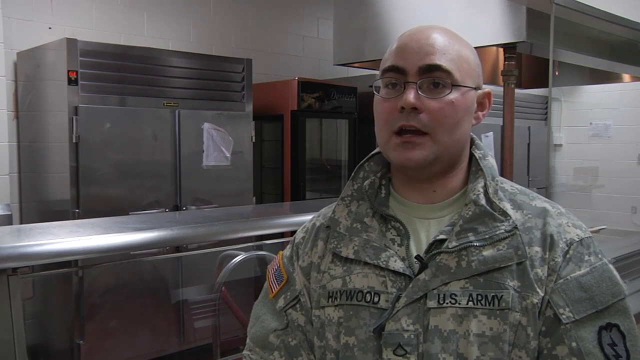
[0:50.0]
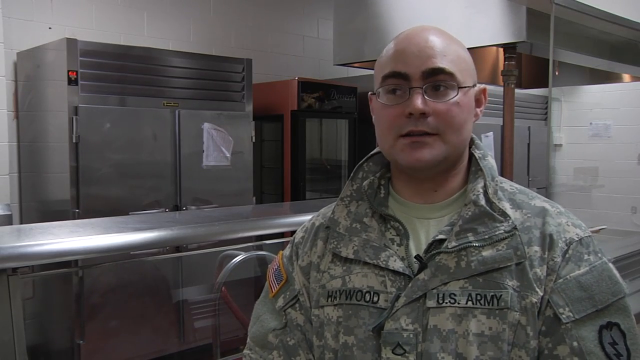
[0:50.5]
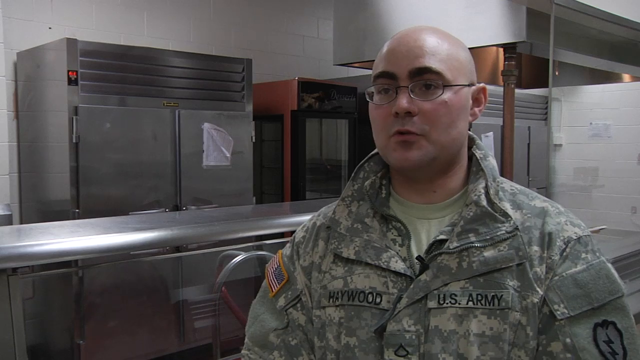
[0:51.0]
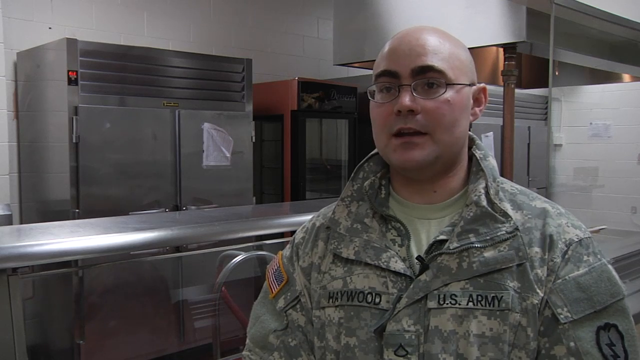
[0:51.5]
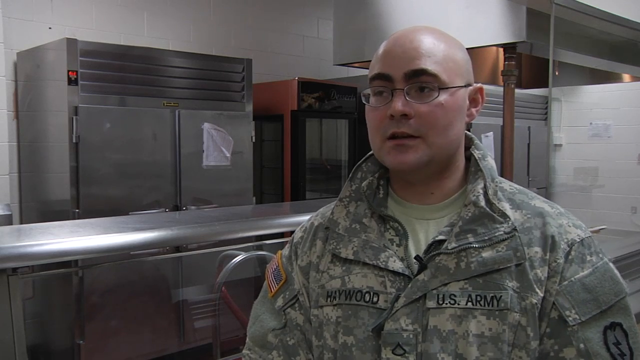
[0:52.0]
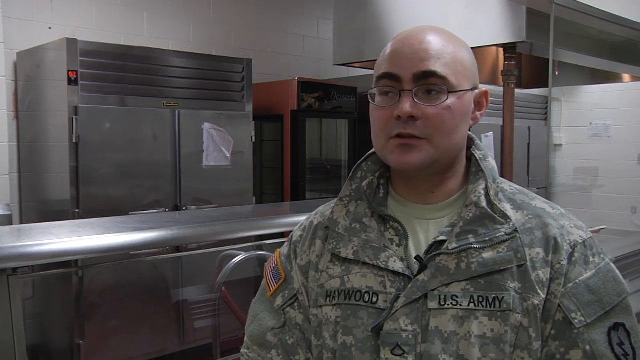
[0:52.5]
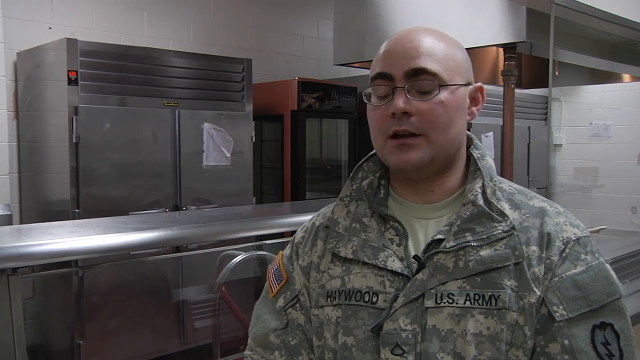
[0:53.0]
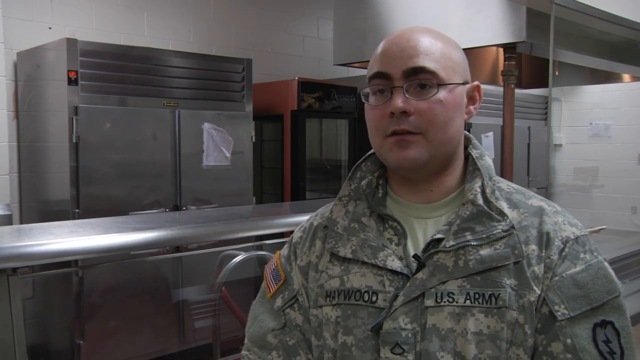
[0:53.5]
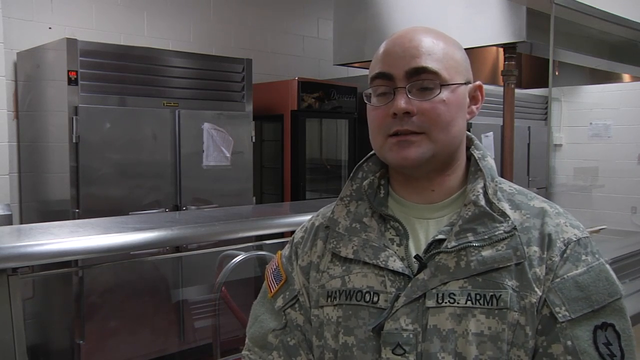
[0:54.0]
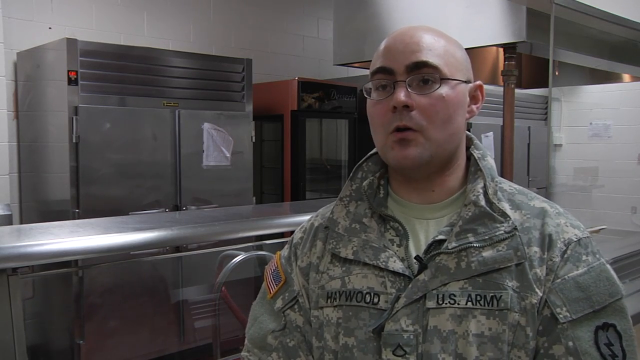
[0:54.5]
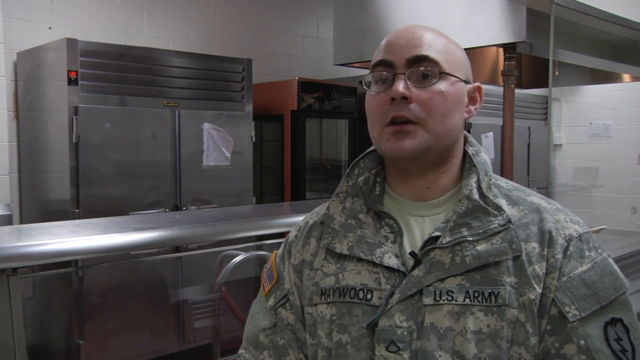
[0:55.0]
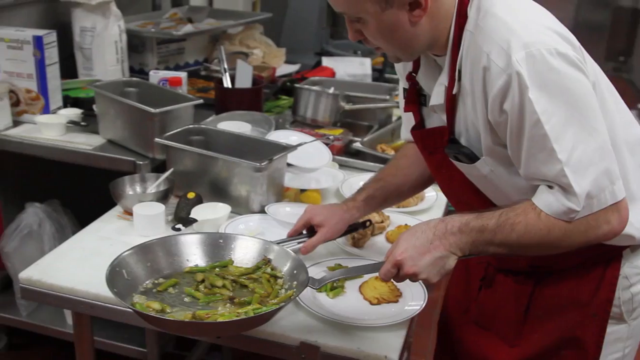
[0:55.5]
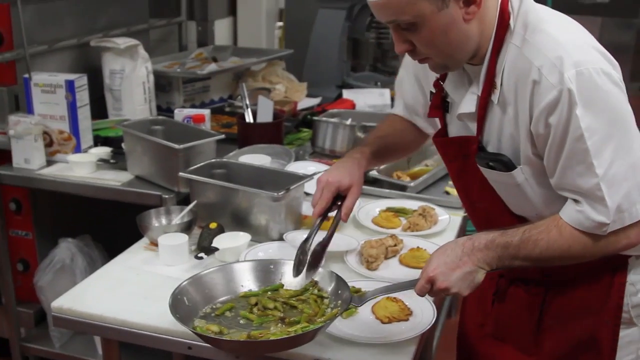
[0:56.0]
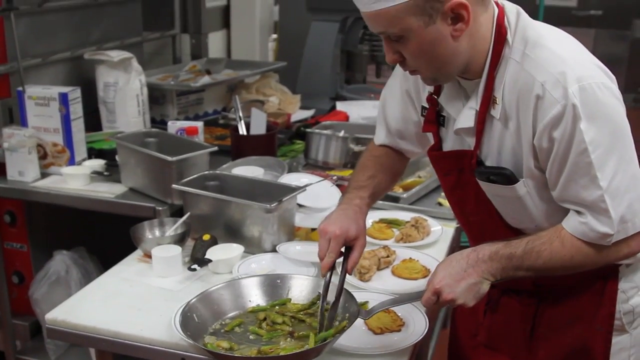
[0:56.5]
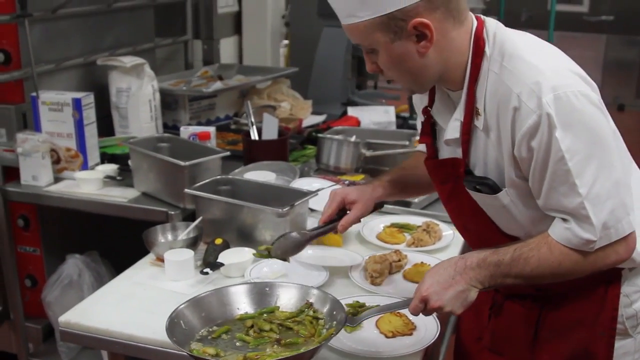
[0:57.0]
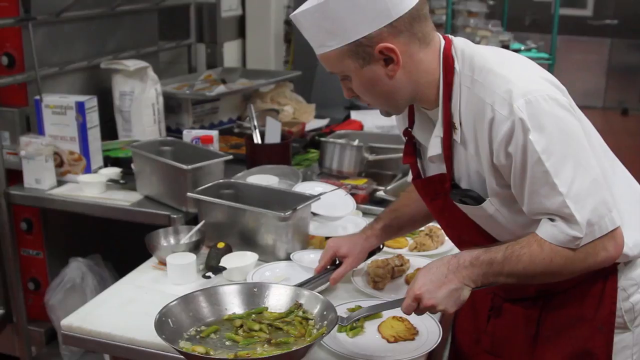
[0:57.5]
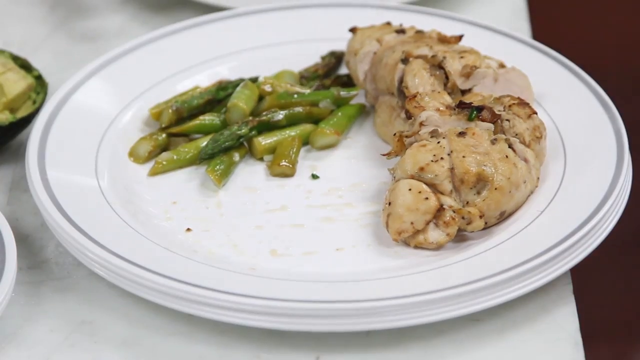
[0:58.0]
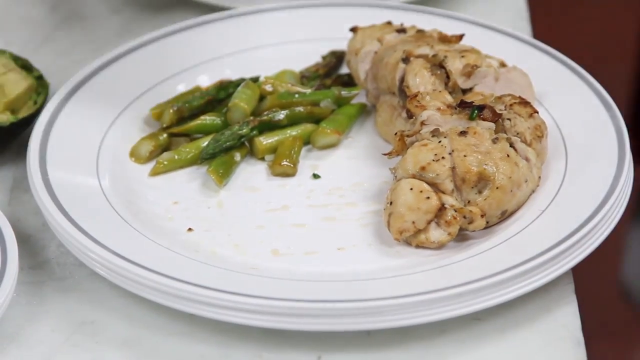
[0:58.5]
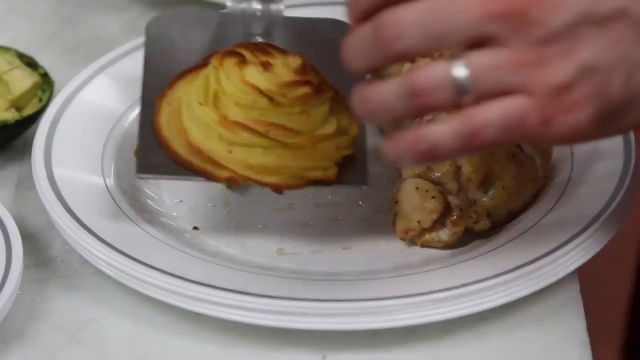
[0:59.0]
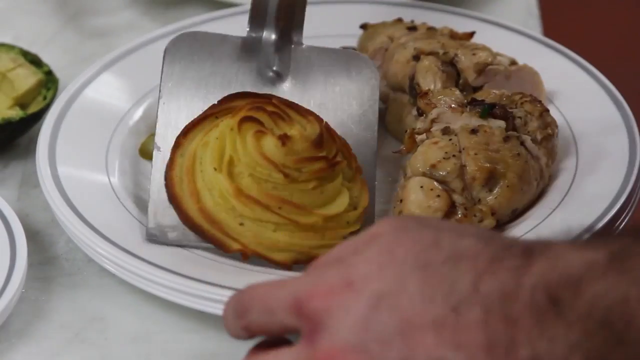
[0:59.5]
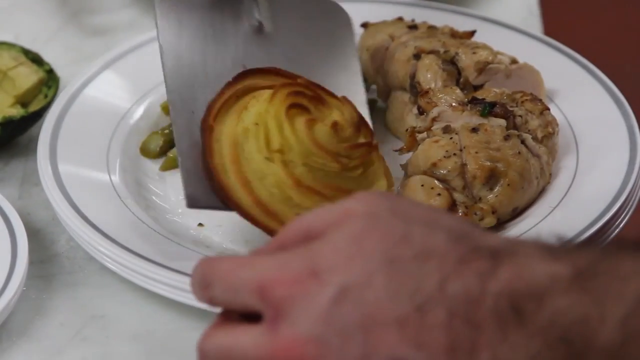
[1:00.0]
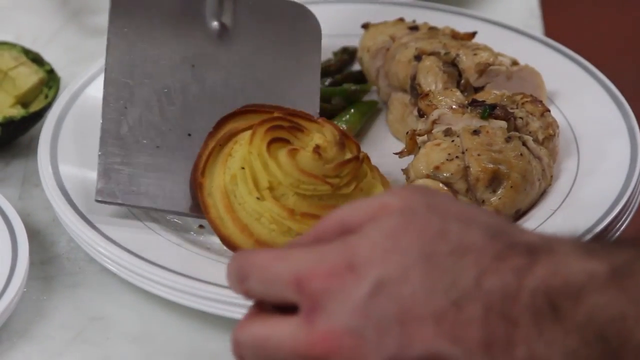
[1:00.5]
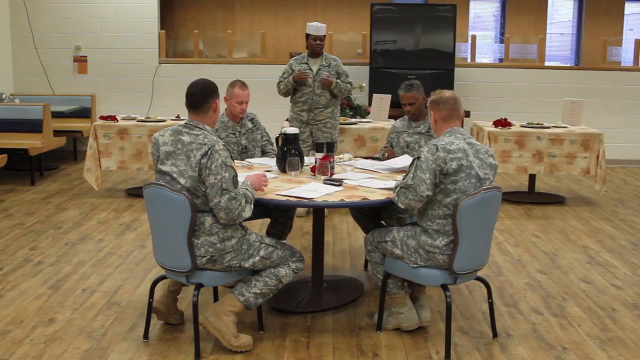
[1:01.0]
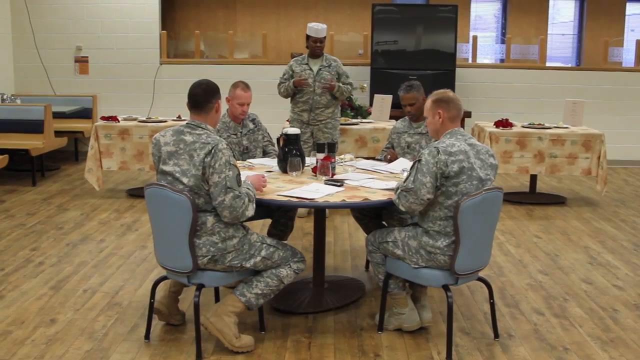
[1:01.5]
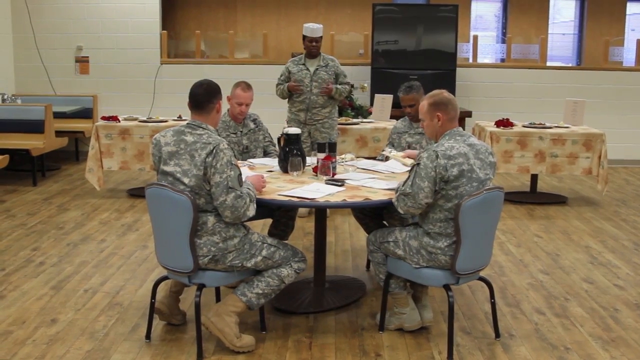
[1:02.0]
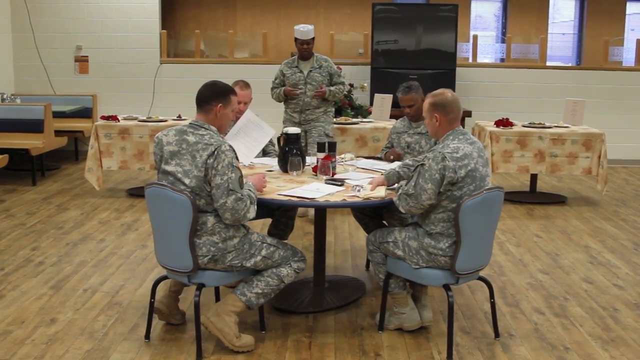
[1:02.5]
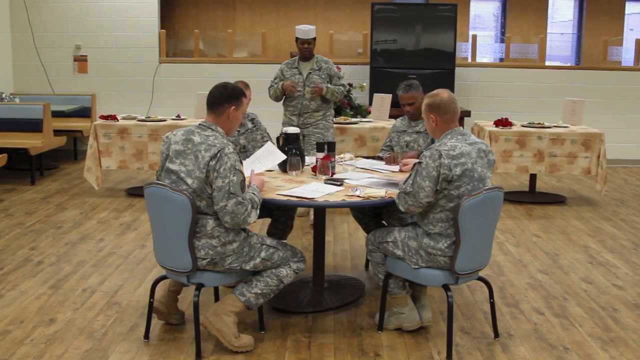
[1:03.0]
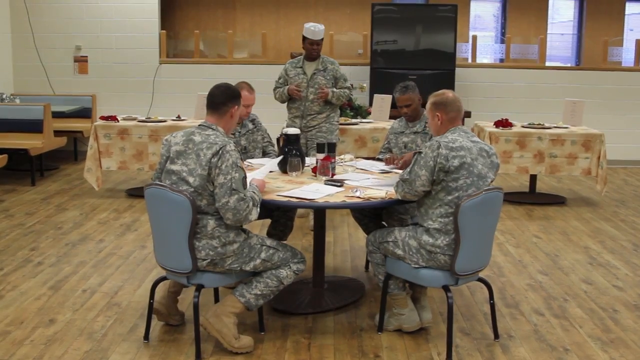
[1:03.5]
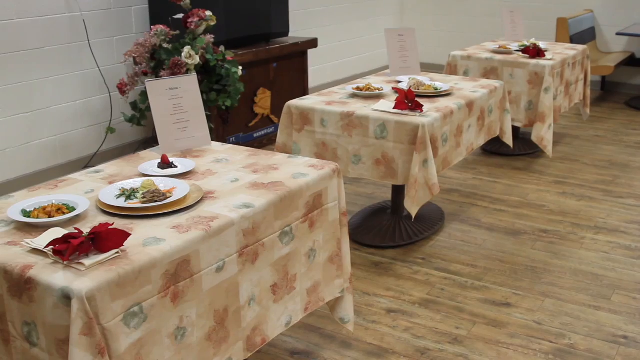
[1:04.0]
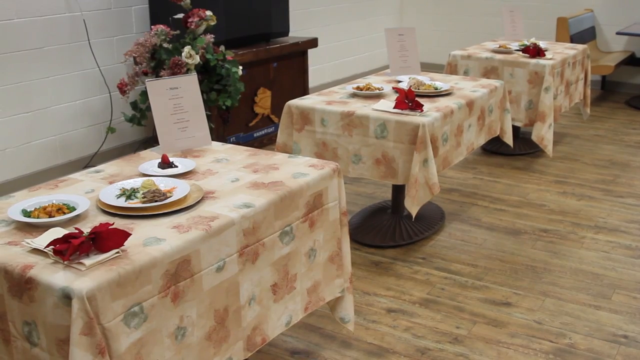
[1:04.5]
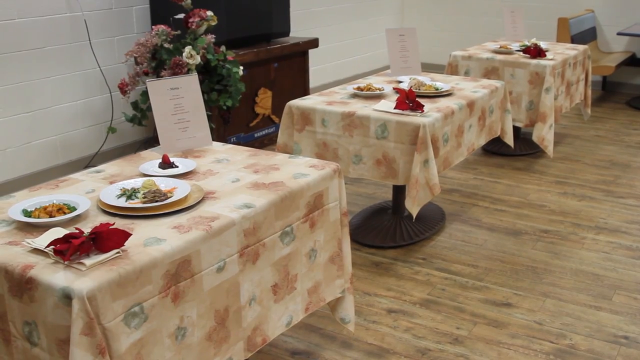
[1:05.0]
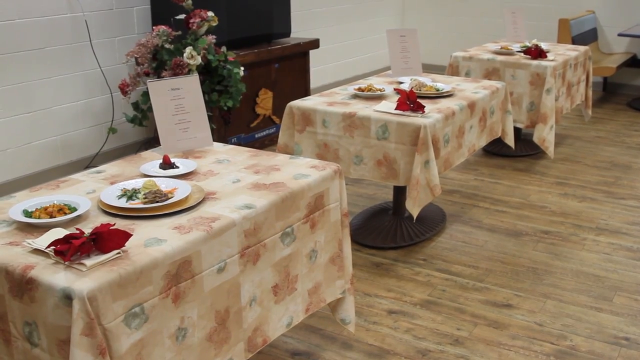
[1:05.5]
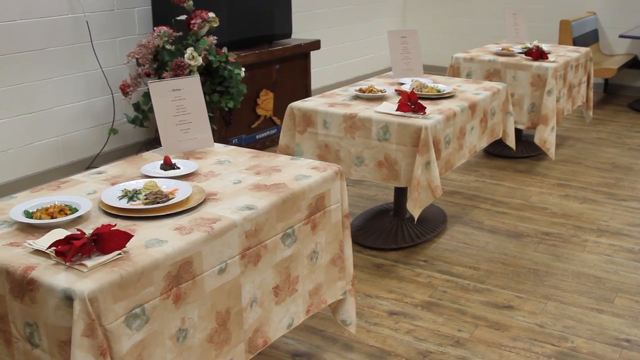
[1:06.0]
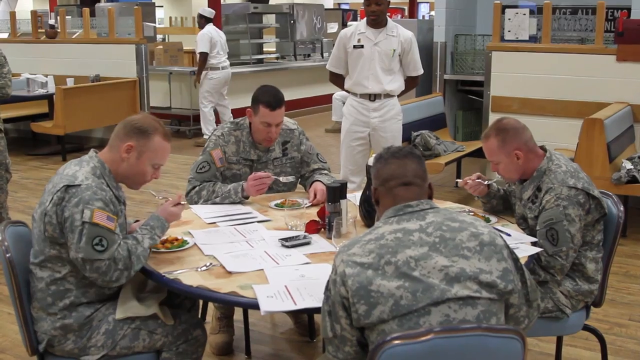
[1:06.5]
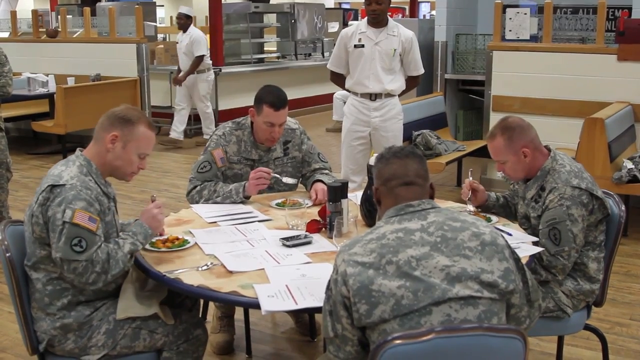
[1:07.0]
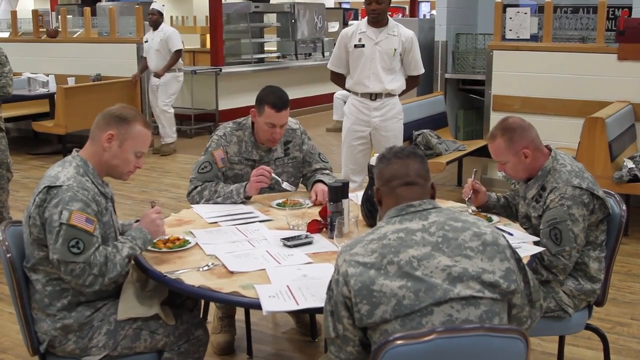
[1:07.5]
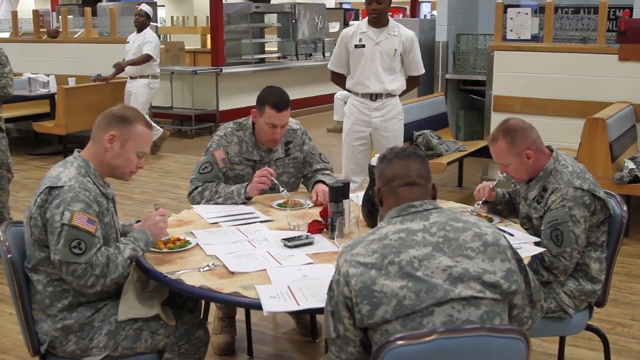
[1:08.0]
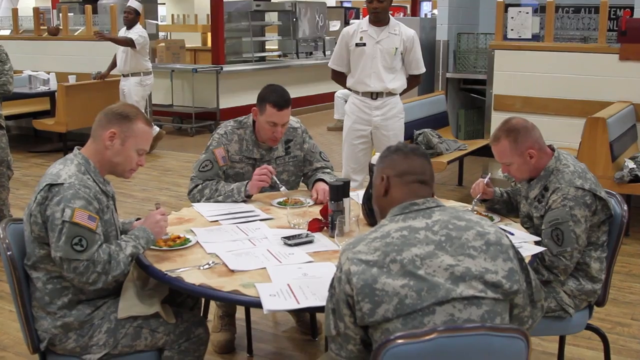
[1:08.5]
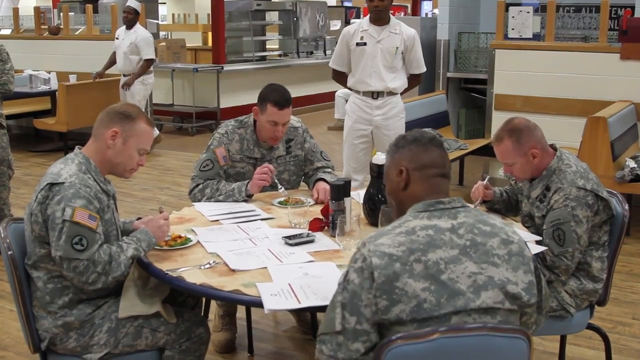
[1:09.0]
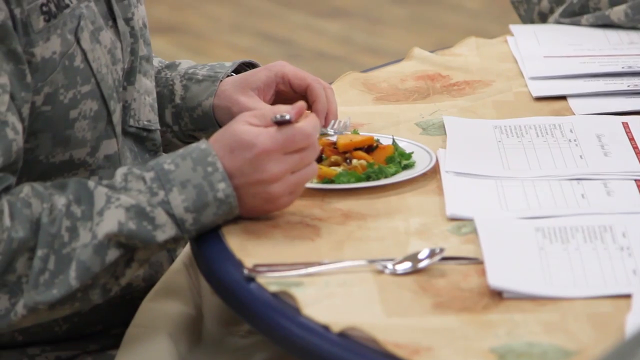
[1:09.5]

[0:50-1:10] The army man is shown talking again. The next scene shows a very cluttered kitchen counter with stuff everywhere. A man wearing a chef uniform and a red apron uses tongs to lift things onto a plate, then uses a spatula to place some kind of potato in a rose-like shape on the plate with some chicken and what looks like possibly asparagus. The next scene shows what looks like a church hall type venue, with various seating in the left-hand corner that looks a bit like pews, and apparently a row of square tables set up with tablecloths in the background. Four men in army uniform sit around a round table looking at menus, while another man in army uniform waits, apparently to take their order. The camera then shows three tables at the head of the room, each with food on it; there seem to be three plates, apparently representing three different courses, and there seems to be a menu propped up for each one. This may be some kind of competition. The army men then eat, generally using only a fork in their right hands, with no knife.